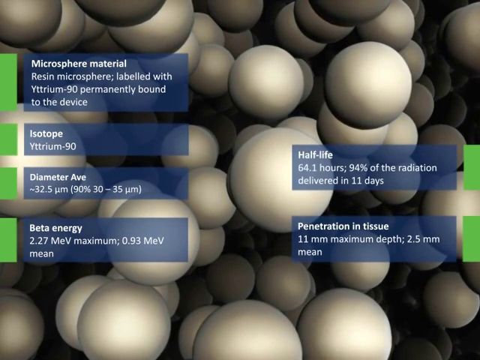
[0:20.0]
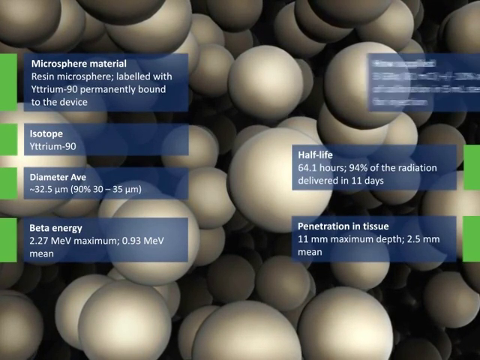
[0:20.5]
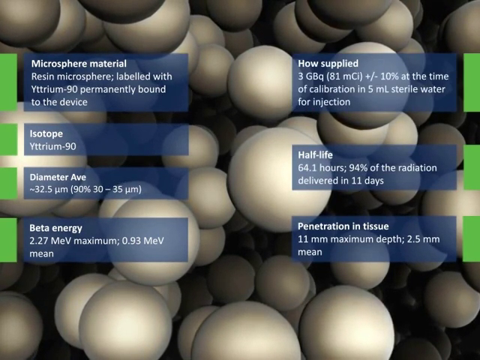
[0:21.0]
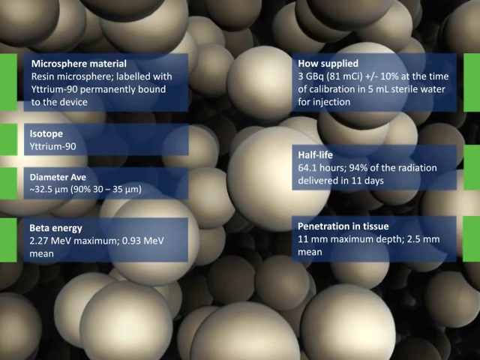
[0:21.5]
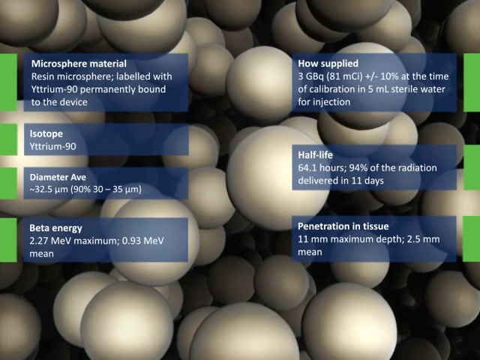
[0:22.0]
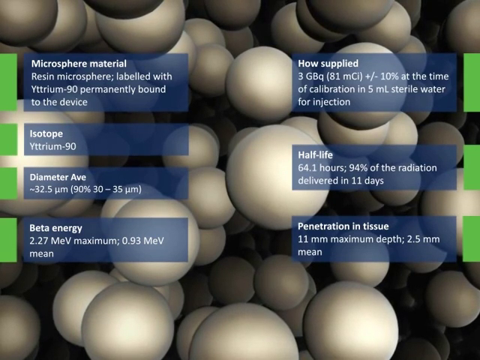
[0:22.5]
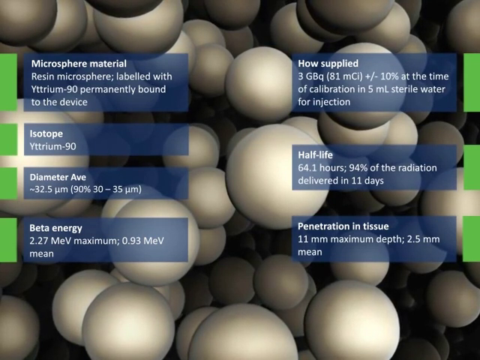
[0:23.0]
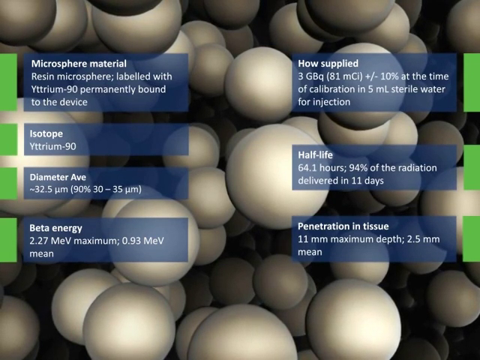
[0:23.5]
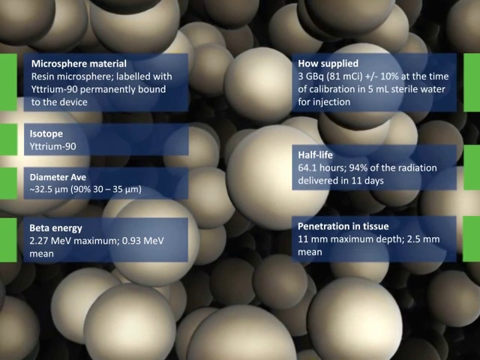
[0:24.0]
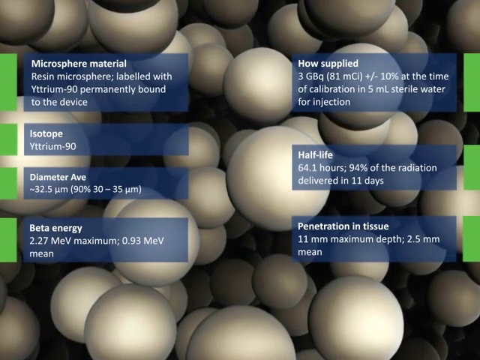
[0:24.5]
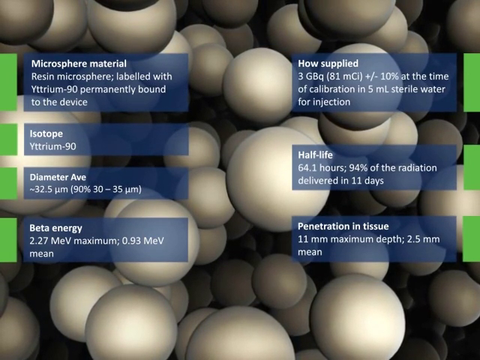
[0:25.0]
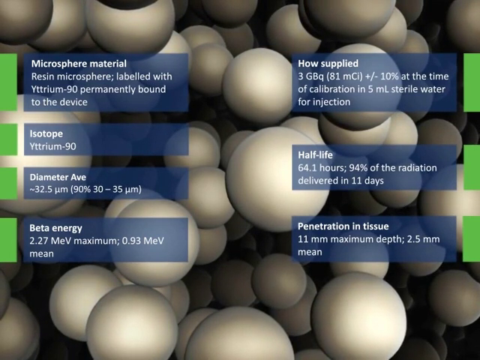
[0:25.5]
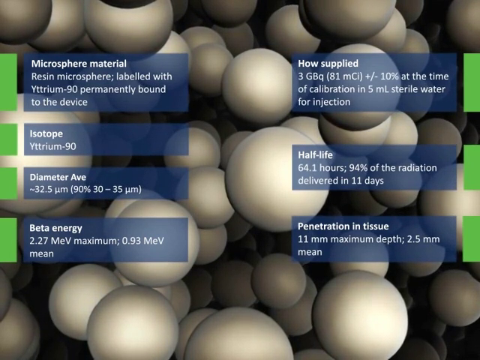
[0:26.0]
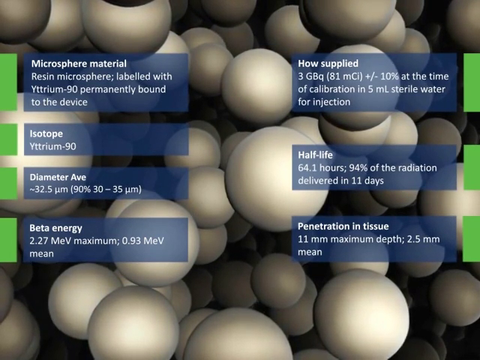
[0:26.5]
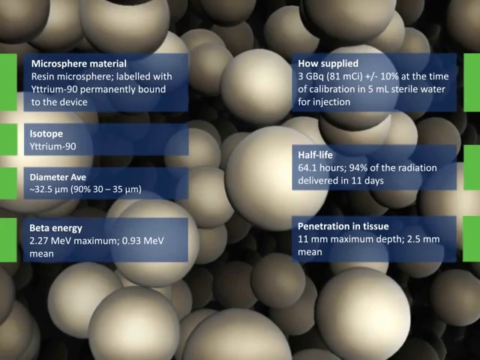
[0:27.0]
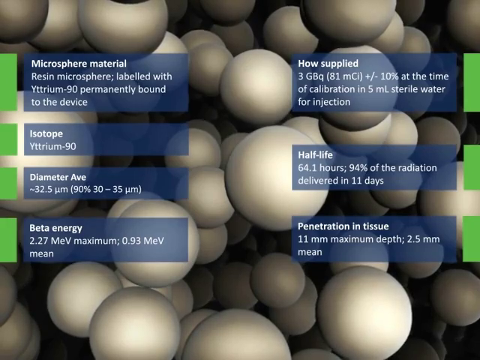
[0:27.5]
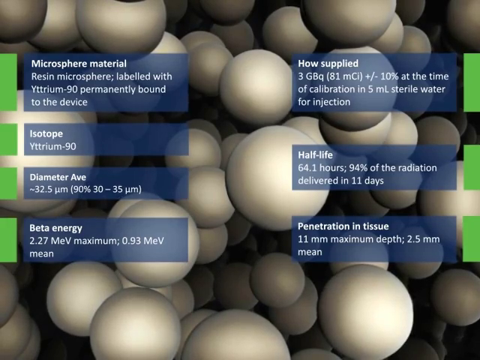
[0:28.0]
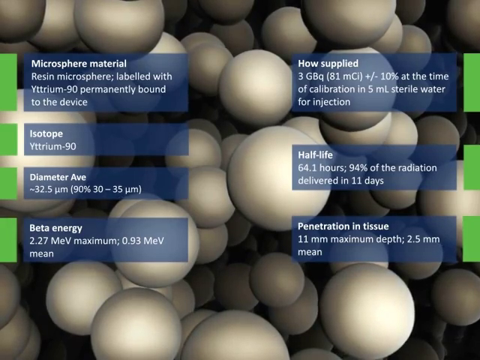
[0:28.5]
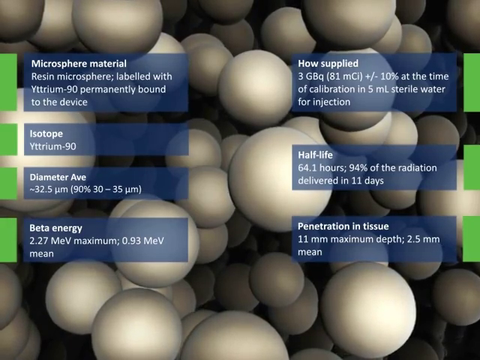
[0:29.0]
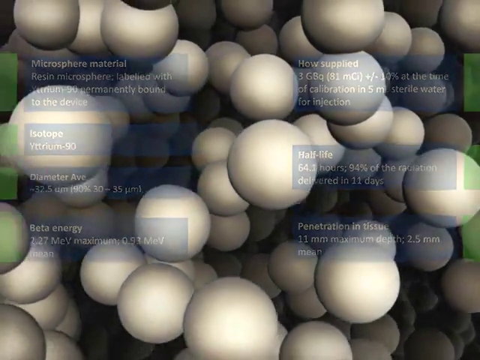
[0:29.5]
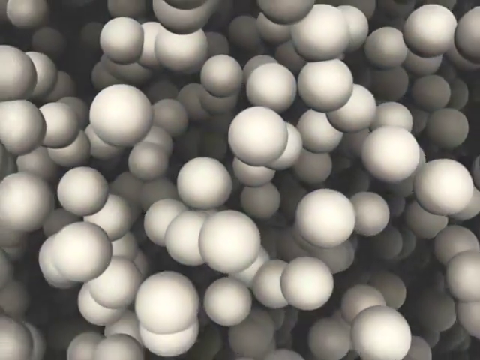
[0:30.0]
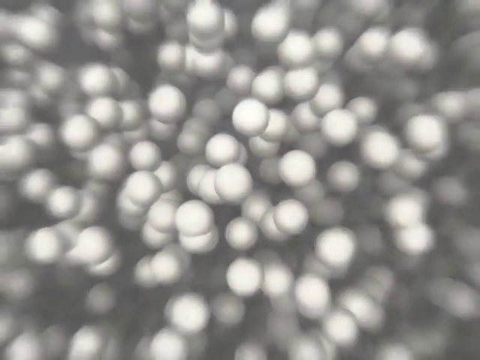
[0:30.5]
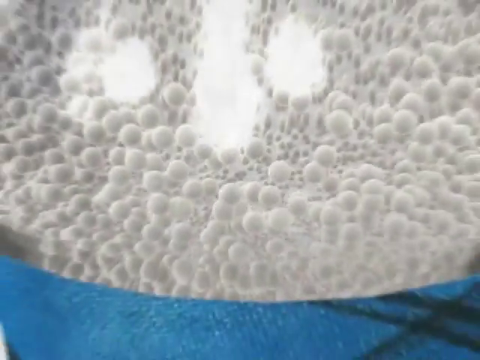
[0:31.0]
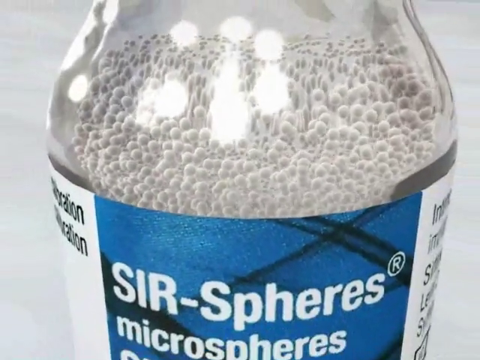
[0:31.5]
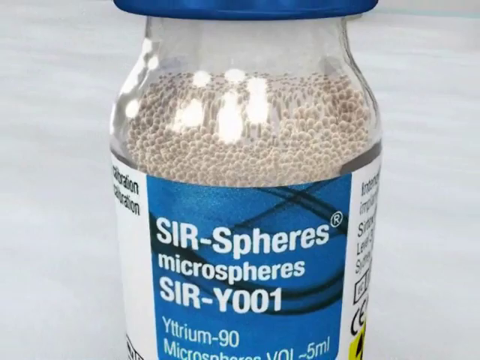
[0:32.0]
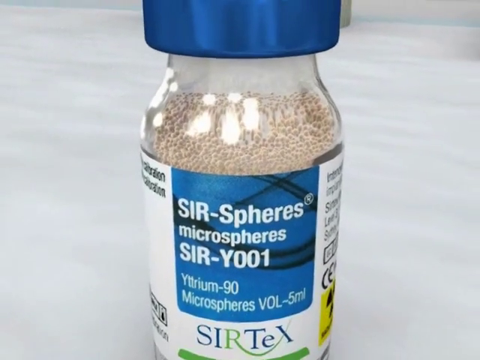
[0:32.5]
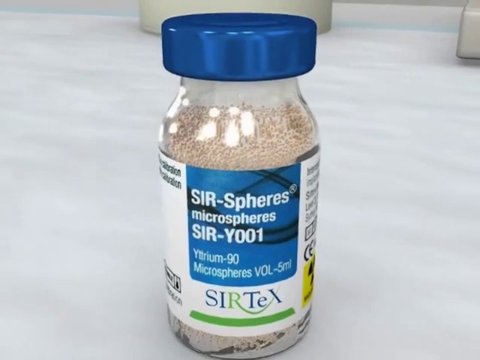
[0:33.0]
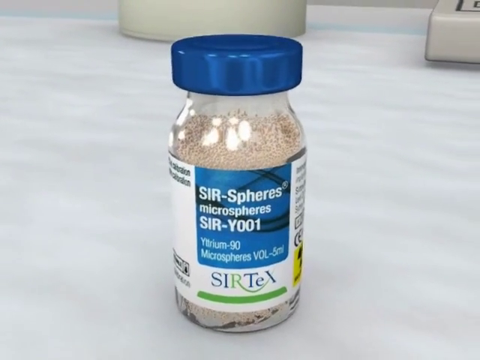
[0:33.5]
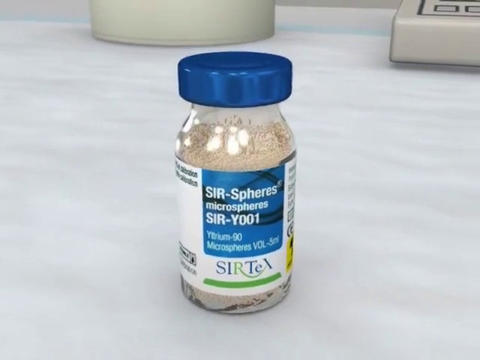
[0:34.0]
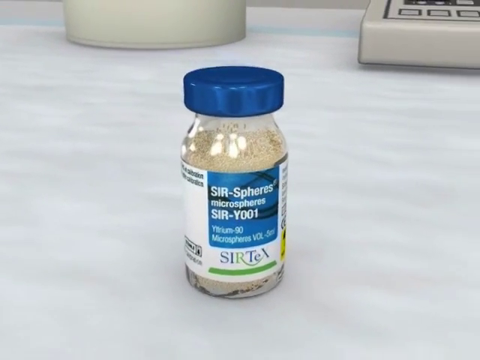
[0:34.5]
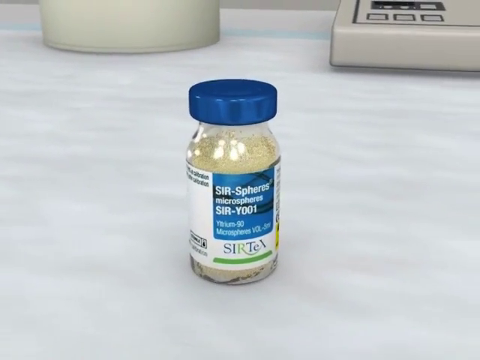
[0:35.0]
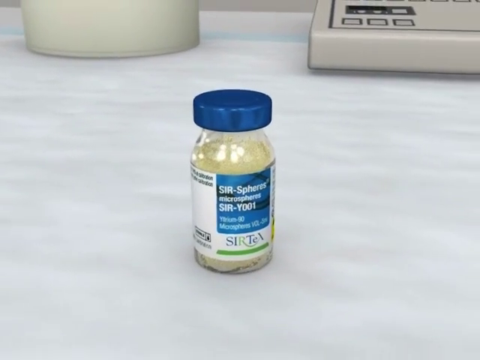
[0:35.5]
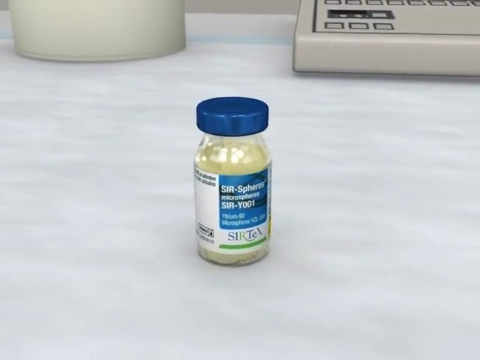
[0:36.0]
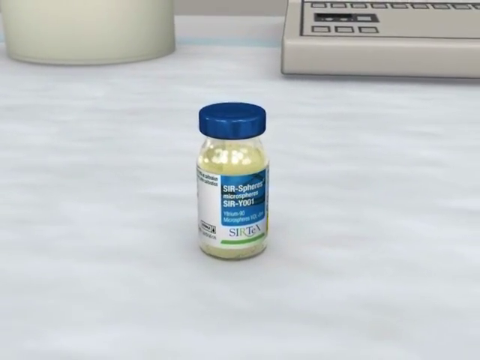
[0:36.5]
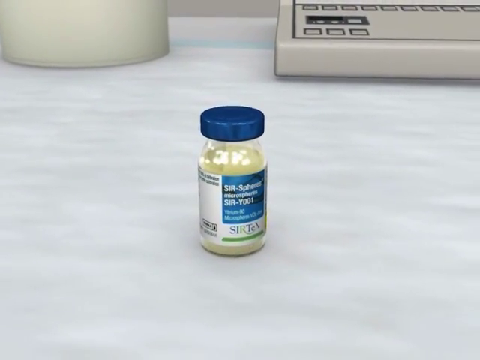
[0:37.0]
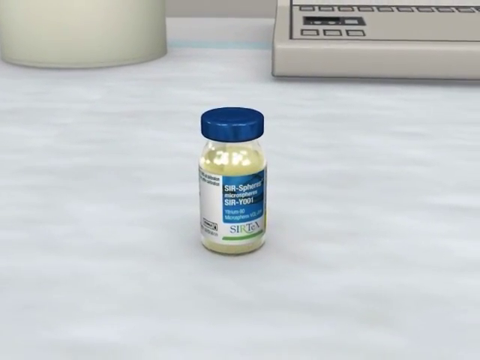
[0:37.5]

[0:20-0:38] A new text box in the top right reads "house supplied". Seven text boxes are now on the screen, labelled "microsphere material", "isotope", "diameter", "beta energy", "house supplied", "half-life" and "penetration in tissue", each with a green tag next to it. The boxes are quite transparent, so the spherical shapes can still be seen behind them. The view then zooms out completely, revealing that all the spherical shapes are inside a bottle or small medical jar of SIR spheres microspheres, with information on the jar. The jar has a blue lid and a blue label and is on a white table with some objects in the background. The jar in the middle of the table is the main focus of the shot.